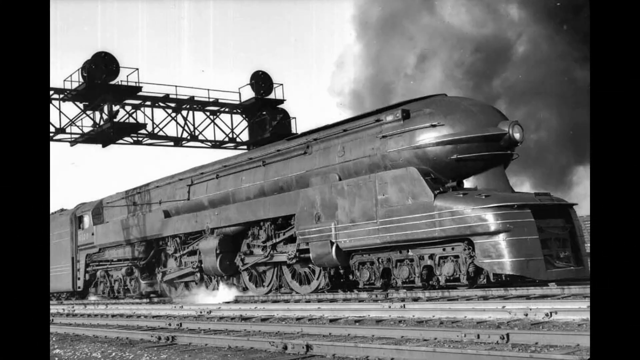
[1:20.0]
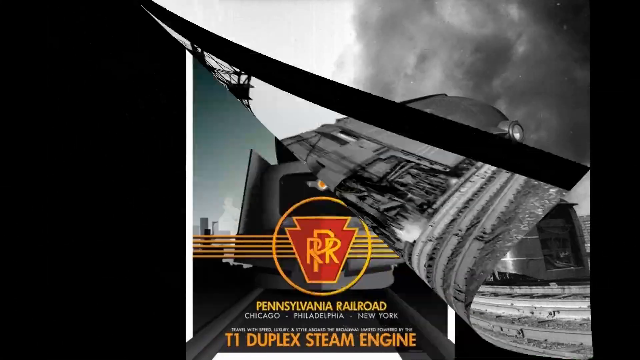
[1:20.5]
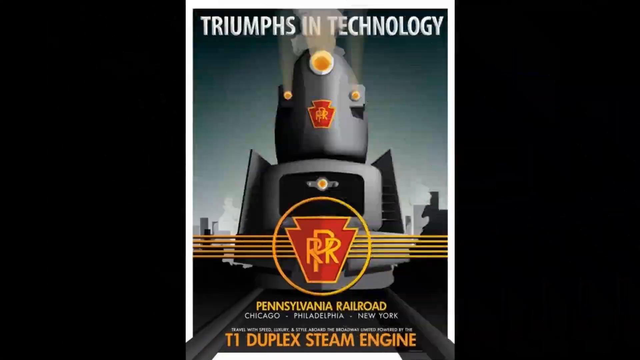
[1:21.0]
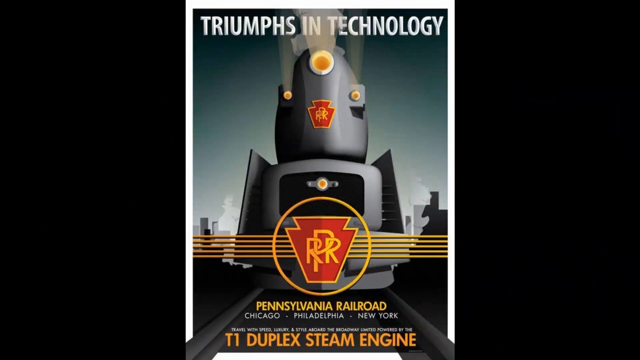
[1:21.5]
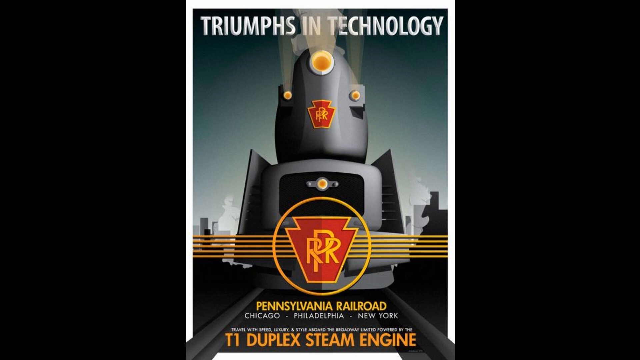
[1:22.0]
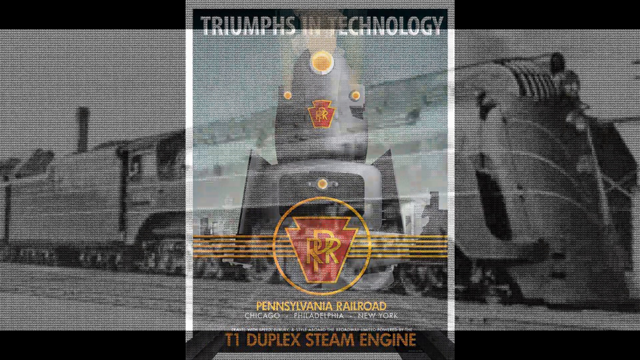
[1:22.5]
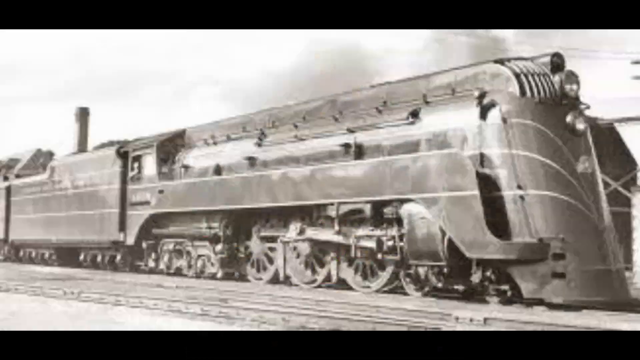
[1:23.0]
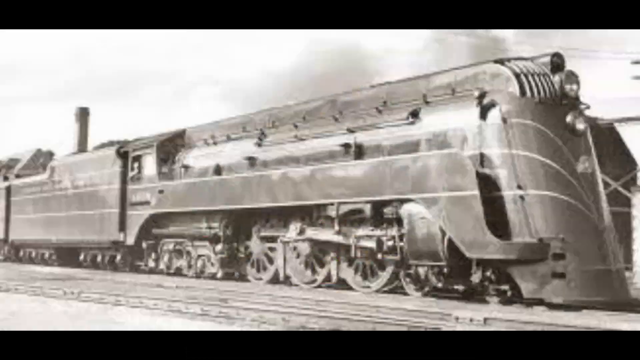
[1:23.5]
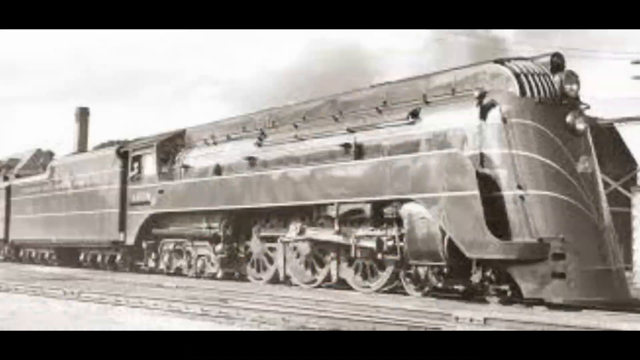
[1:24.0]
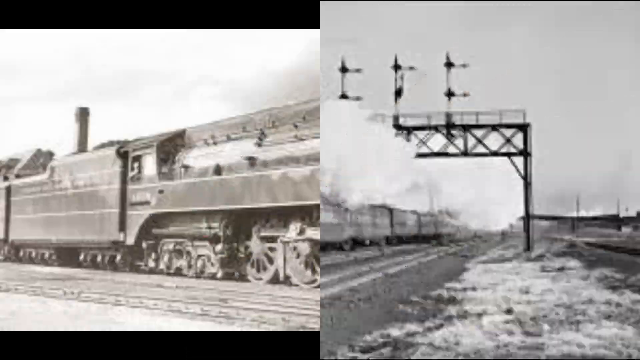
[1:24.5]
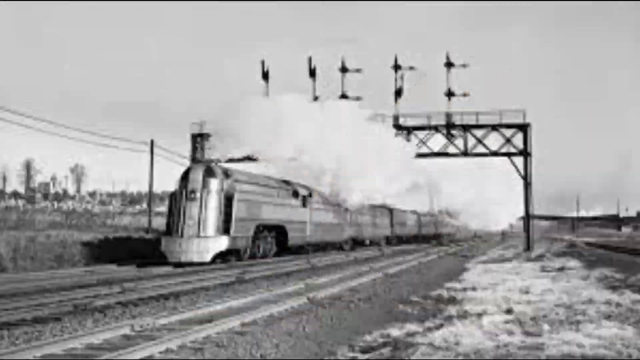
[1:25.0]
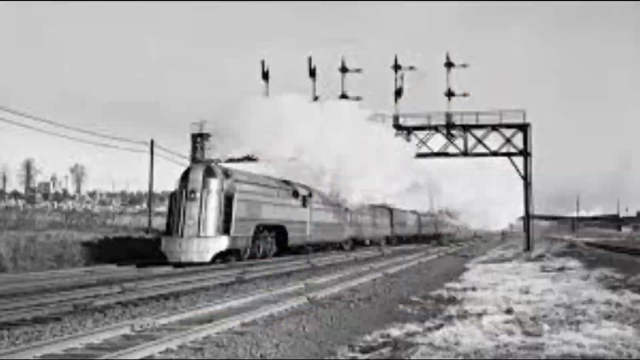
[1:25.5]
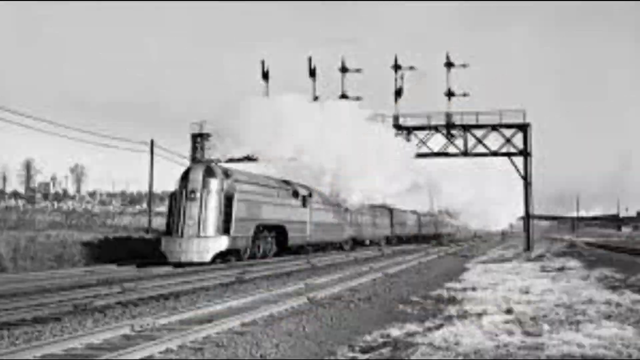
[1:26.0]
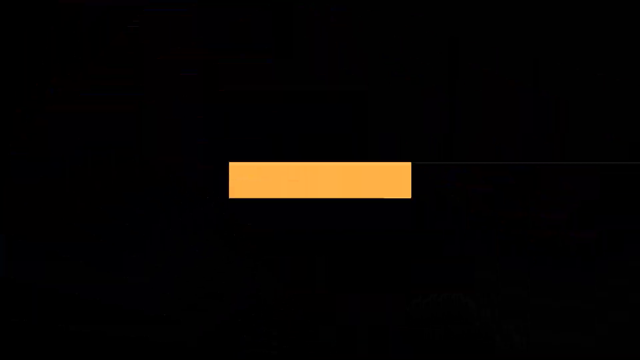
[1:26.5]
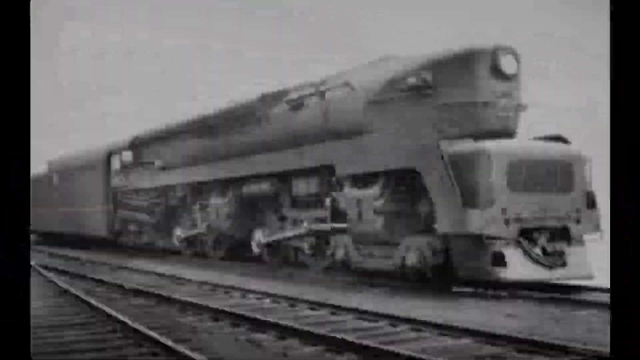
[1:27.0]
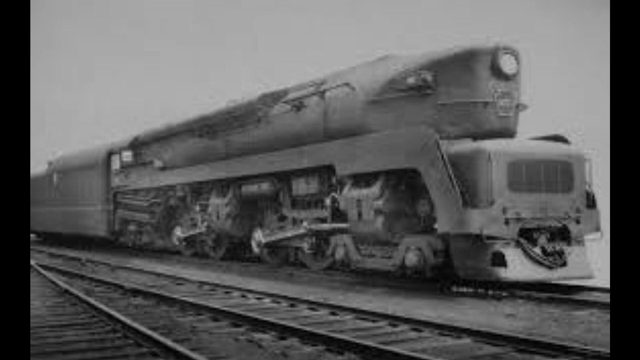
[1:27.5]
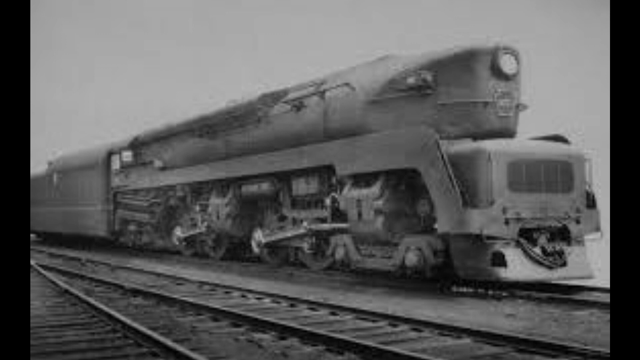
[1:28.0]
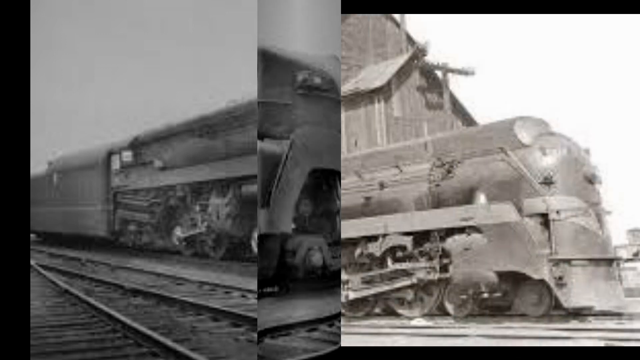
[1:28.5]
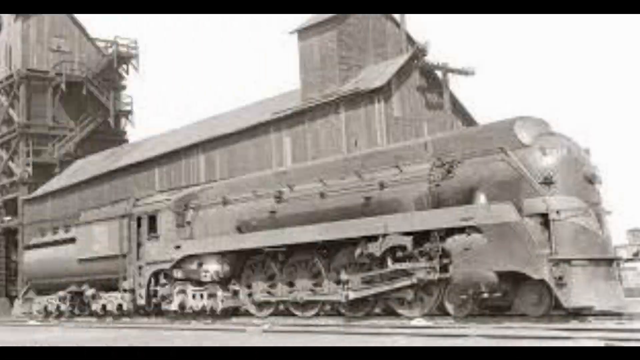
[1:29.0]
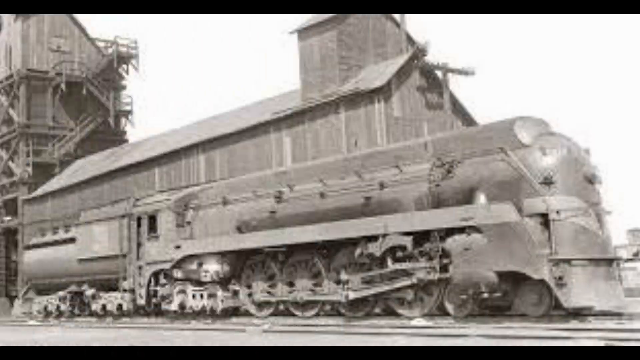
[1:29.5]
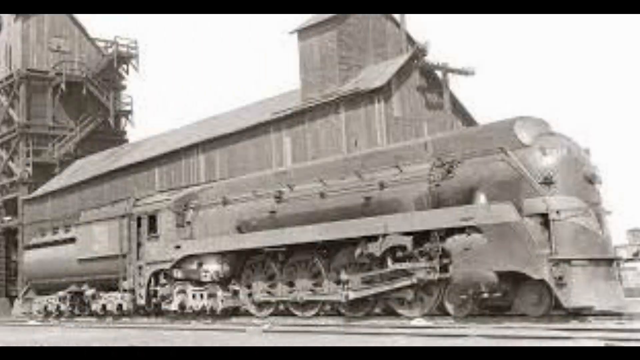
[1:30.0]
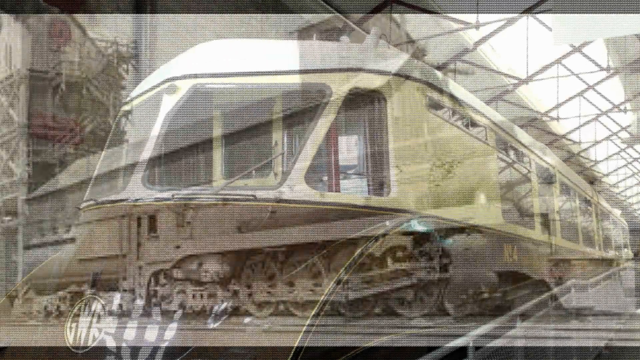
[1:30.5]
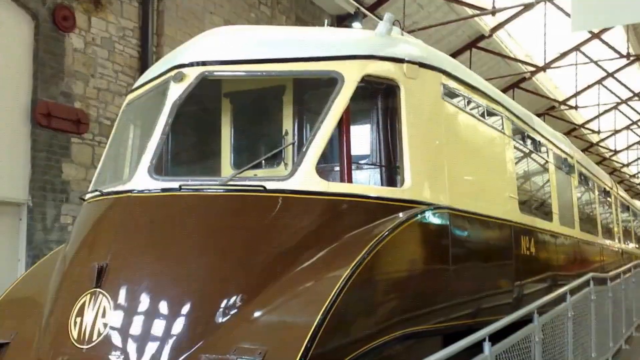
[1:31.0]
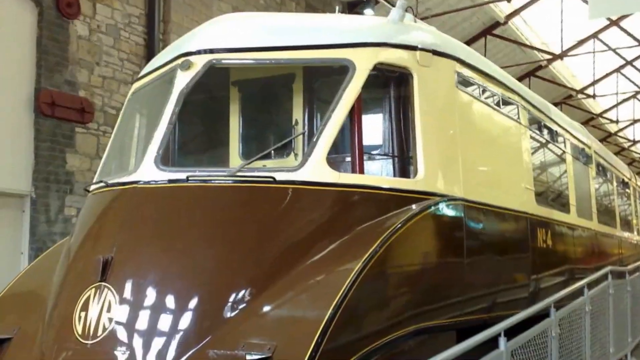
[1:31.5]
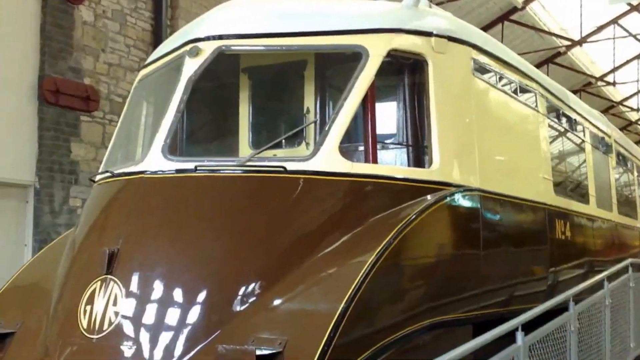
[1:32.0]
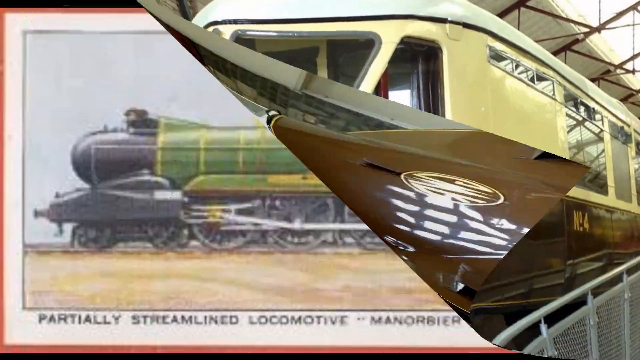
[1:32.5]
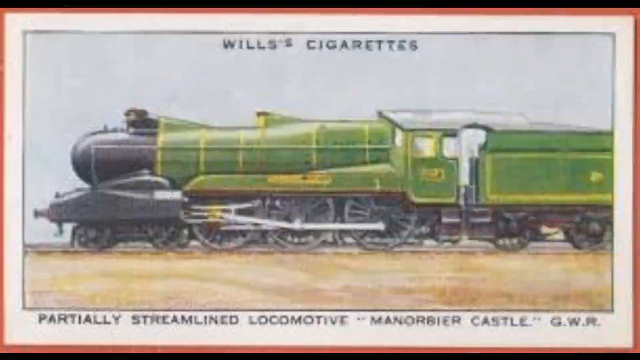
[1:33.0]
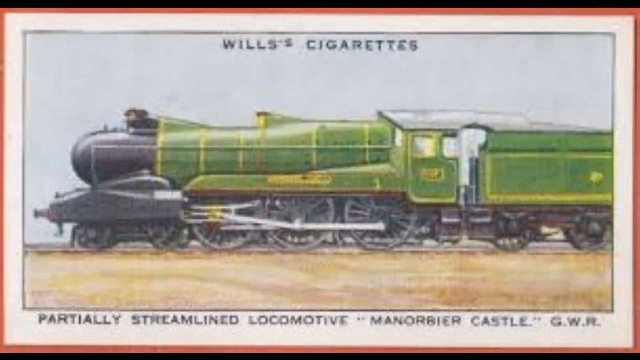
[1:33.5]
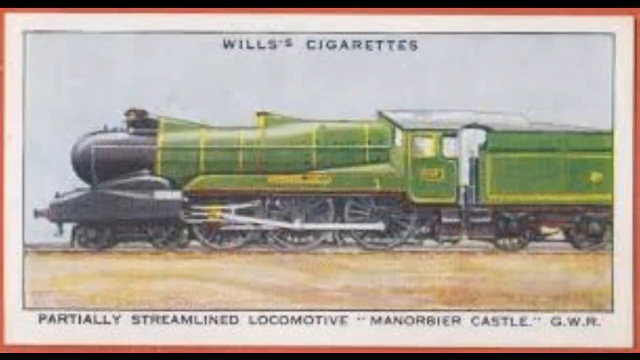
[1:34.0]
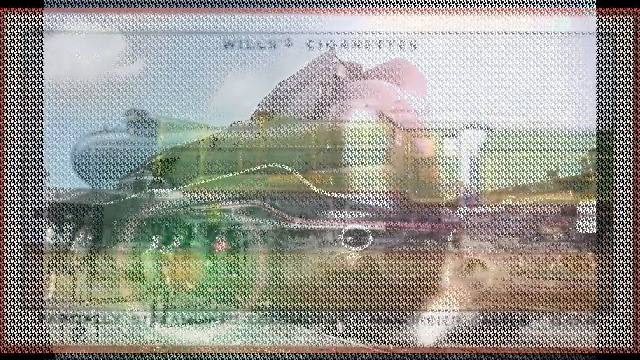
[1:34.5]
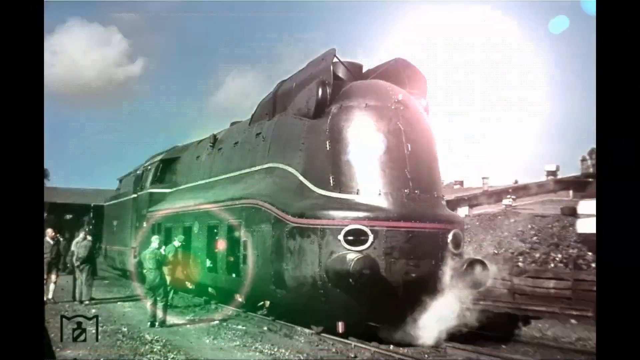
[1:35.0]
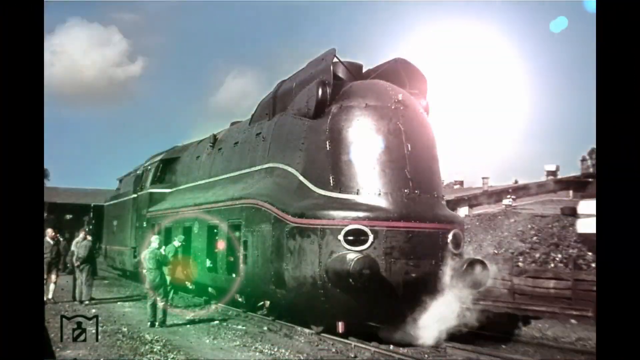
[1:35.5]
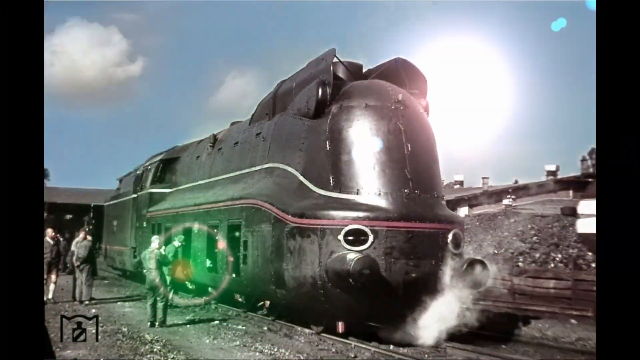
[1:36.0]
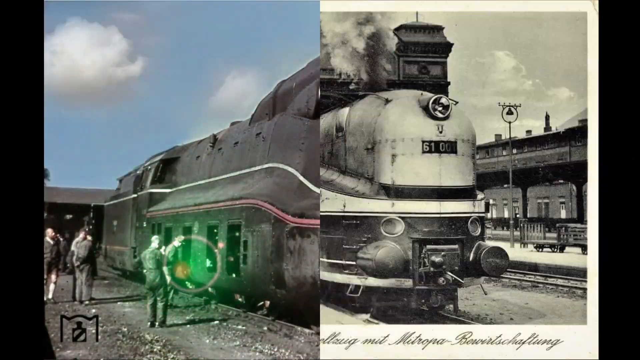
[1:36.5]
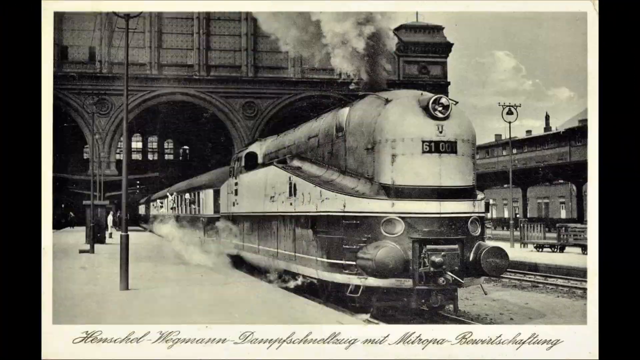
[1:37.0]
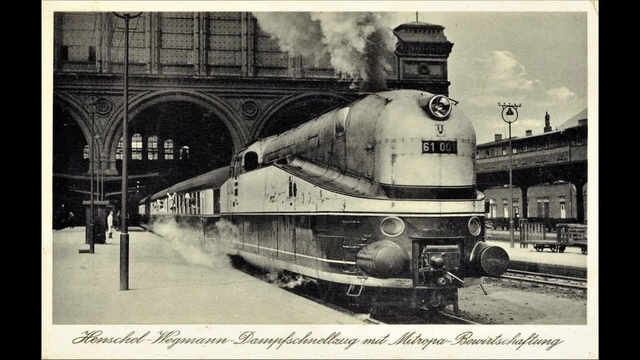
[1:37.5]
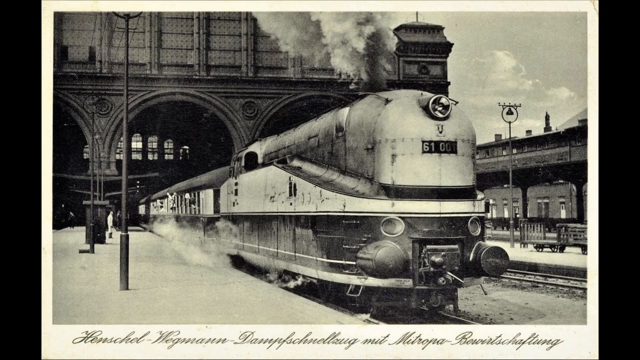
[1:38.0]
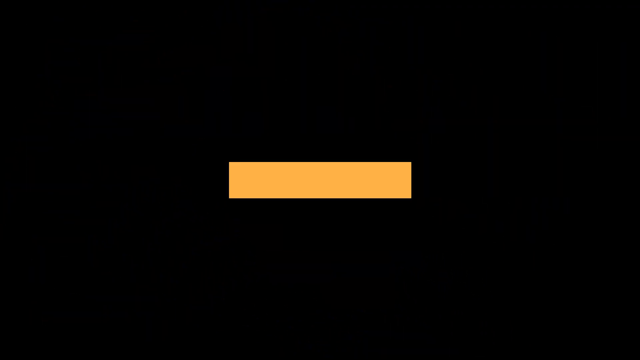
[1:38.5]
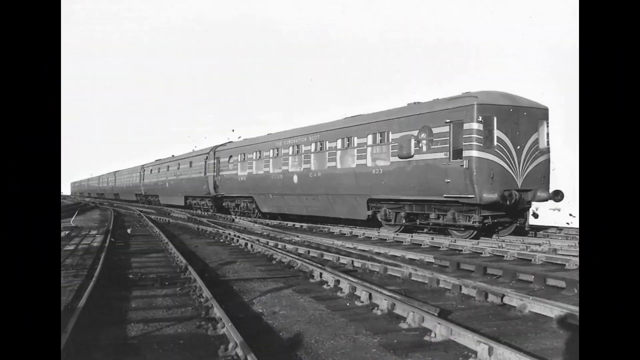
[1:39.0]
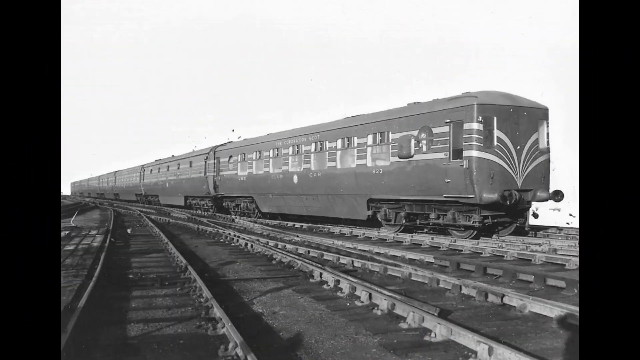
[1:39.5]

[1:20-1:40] An advert for a train shows text that apparently reads "Triumphs in Technology Pennsylvania Railway, Chicago, Philadelphia, New York, RPR" on an image of the front of a black train with its lights shining. A black and white image of a train follows, then another black and white image of a train with a plume of white smoke, perhaps steam, billowing. Next is a stationary train with the railway station or rail houses behind it, then an orange or gold train that looks very clean and shines. A cigarette case or carton appears with a steaming locomotive on it, a green train on its front. Then comes a train whose front almost looks like a face, followed by a black and white still of a train that looks very black.